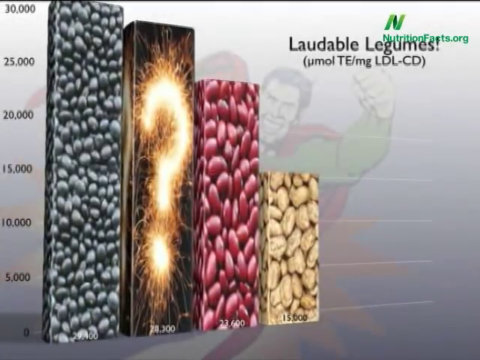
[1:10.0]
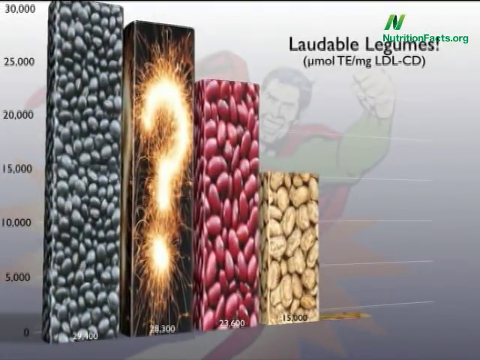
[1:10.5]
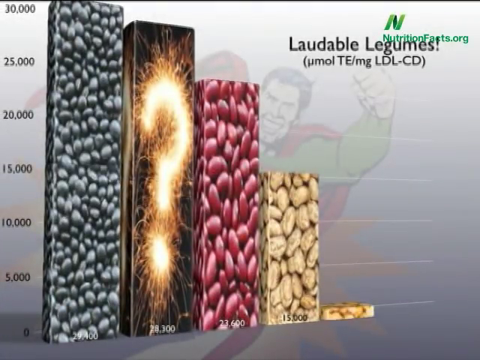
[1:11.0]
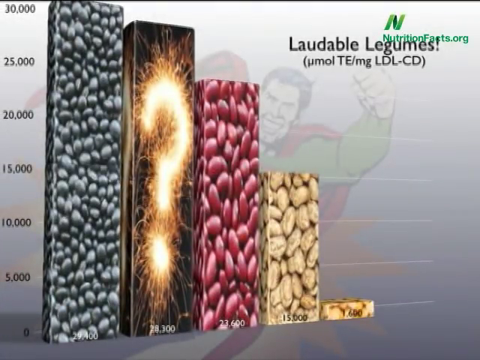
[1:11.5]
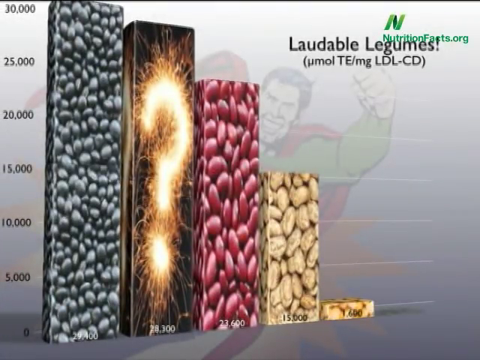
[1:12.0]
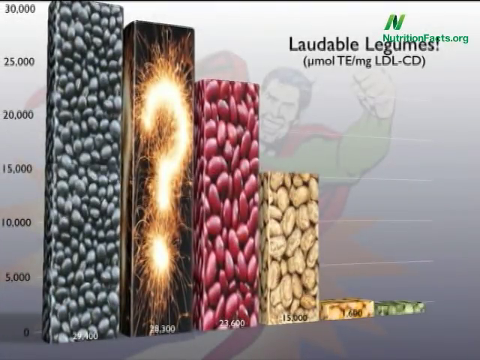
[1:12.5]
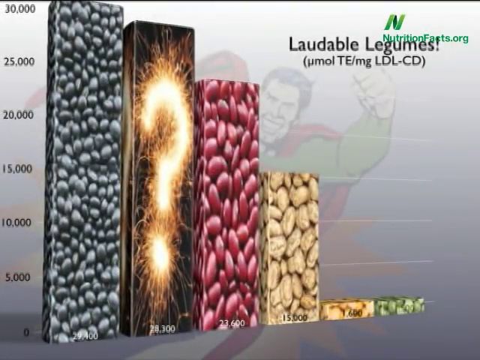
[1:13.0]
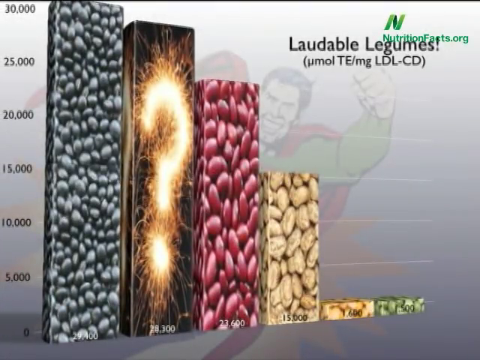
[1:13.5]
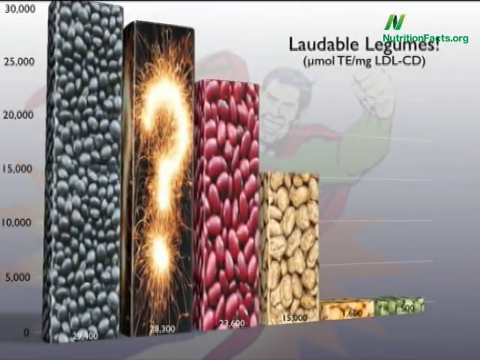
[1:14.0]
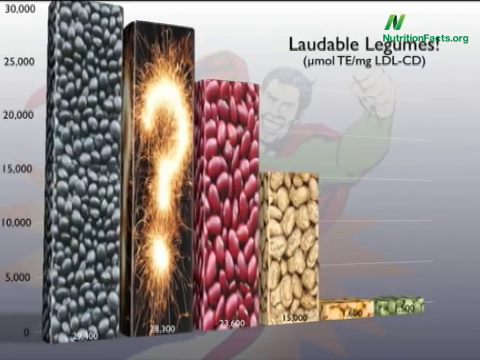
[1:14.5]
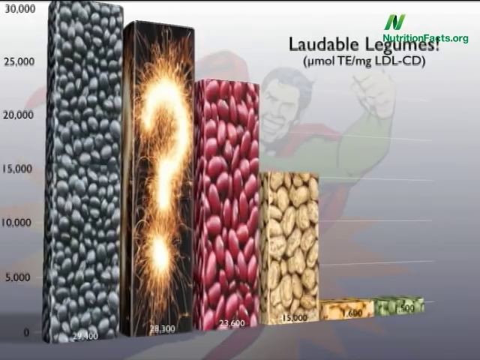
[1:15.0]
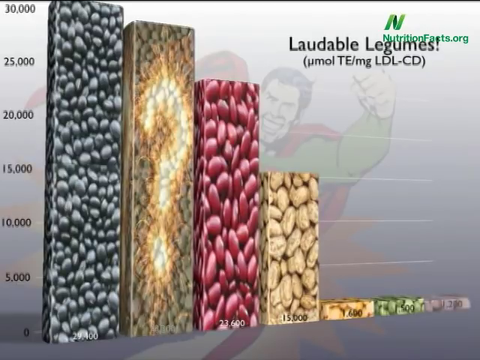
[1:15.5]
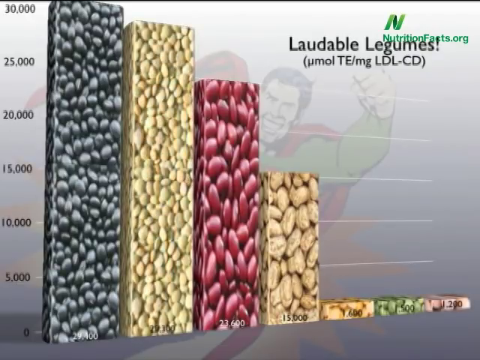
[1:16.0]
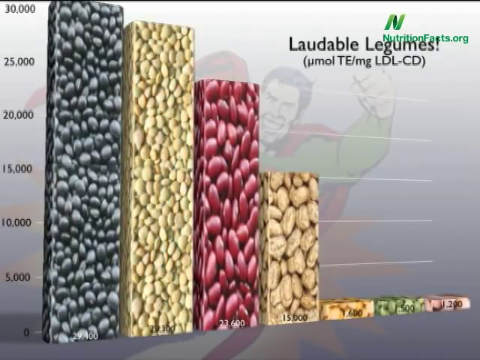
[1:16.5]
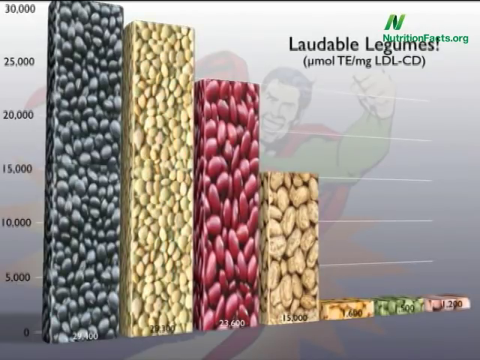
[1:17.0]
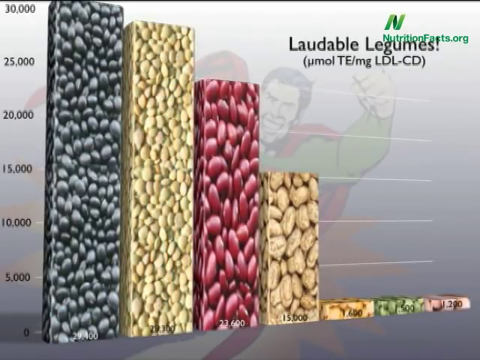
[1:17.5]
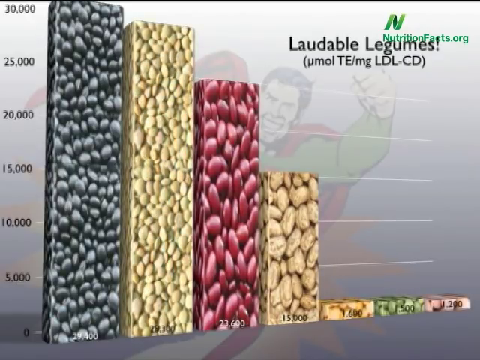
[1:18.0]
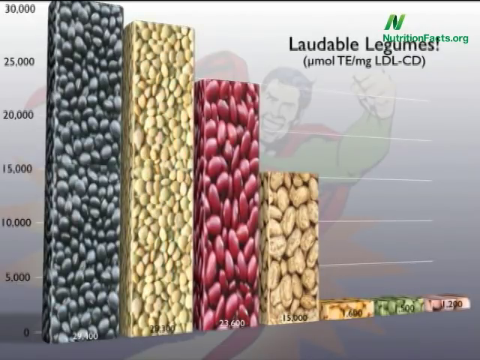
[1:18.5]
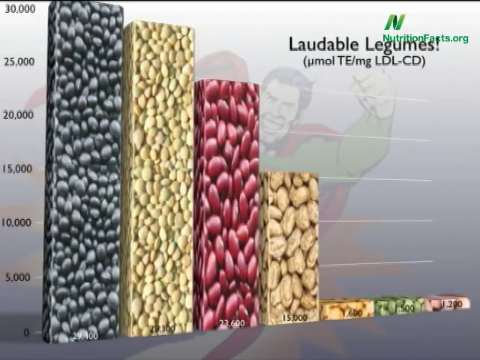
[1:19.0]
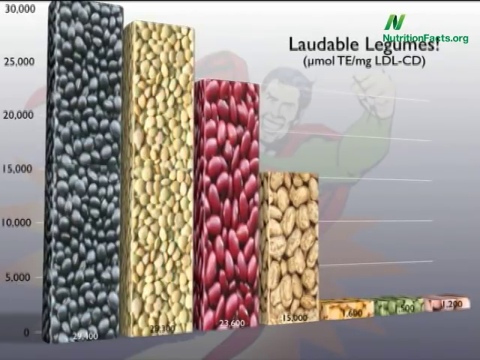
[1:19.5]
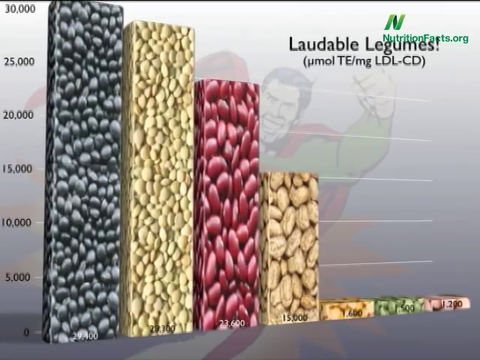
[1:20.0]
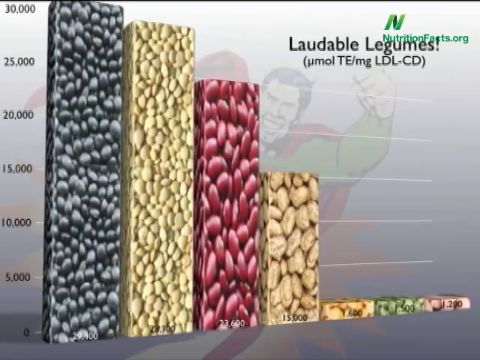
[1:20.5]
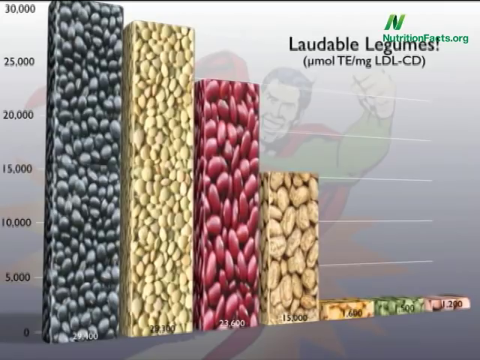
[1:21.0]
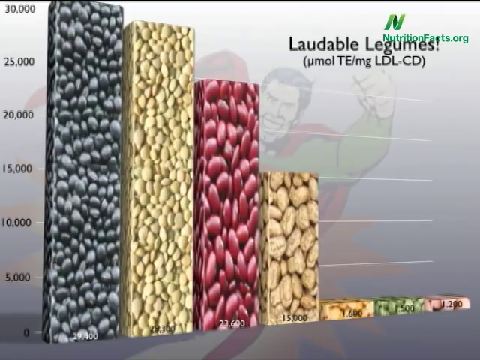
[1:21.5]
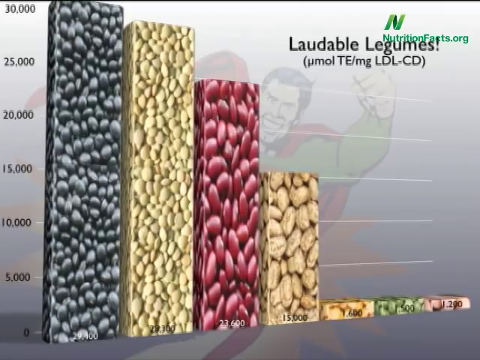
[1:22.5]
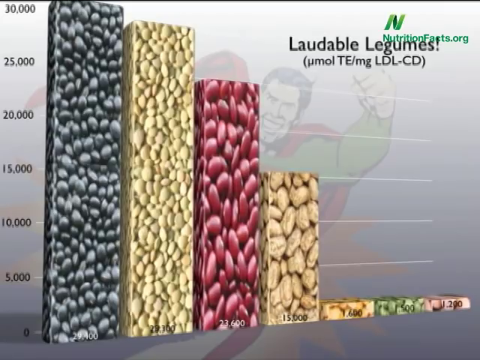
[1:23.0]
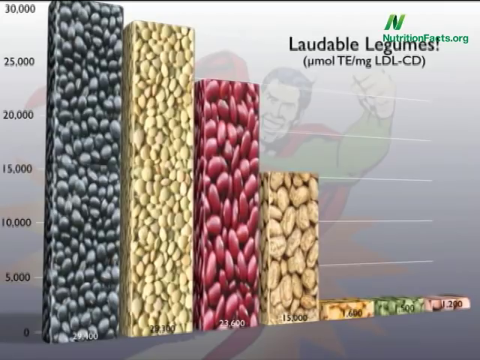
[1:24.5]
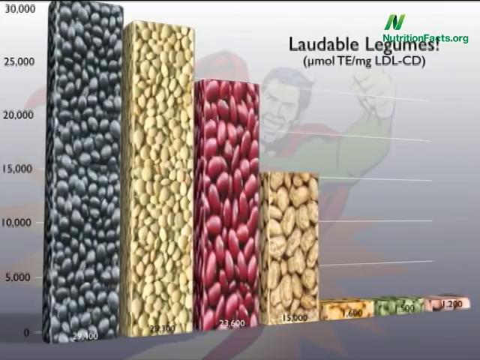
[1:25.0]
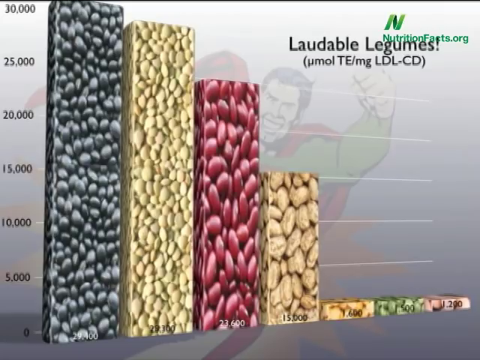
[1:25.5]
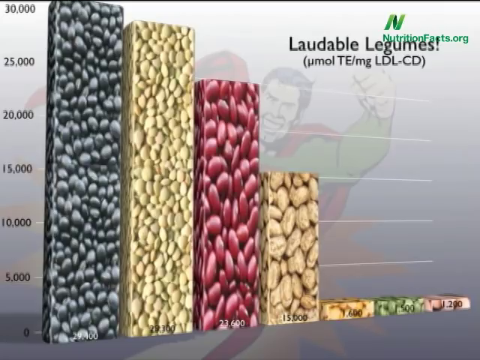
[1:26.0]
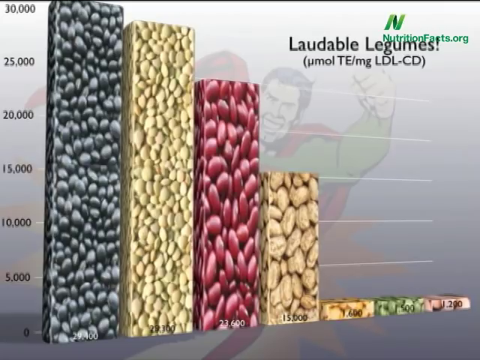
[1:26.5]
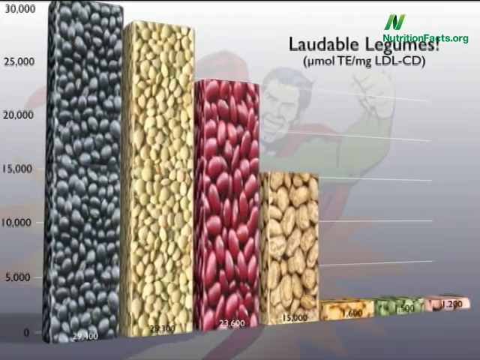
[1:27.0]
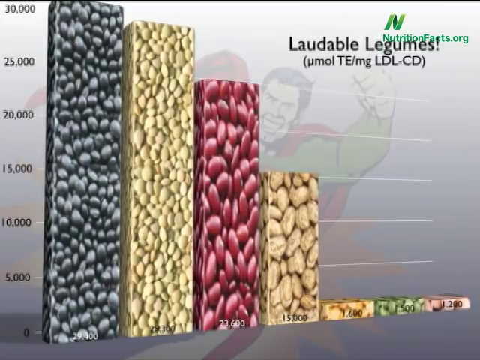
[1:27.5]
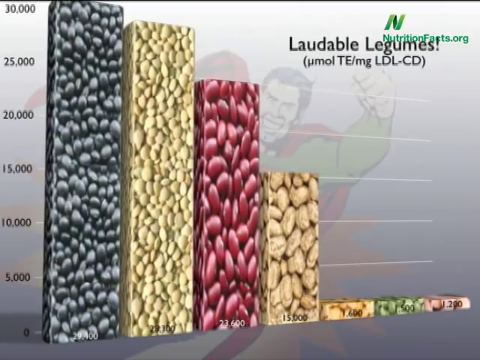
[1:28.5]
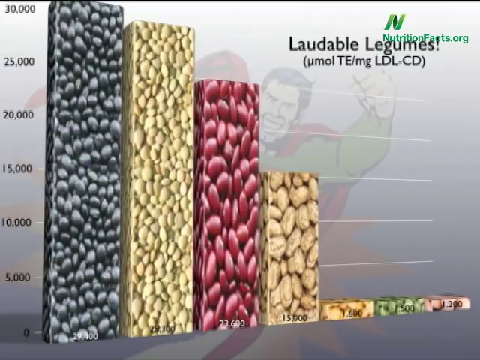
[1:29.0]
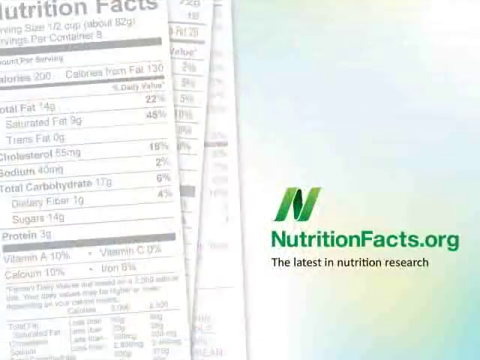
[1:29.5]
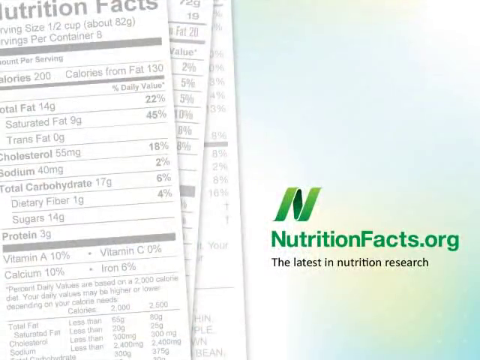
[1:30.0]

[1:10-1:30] A chart titled "Laudable Legumes" begins by showing four bars of what looks like different types of beans, after which three much smaller bars rise on the right-hand side of the screen. Animation effects play while the chart is displayed. The first bar is about 30,000, the second about 28,000, the third about 24,000 and the fourth about 15,000, while the last three are under 2,000. The y-axis is marked in steps of 5,000. The NutritionFacts.org logo is in the top right corner, and an image of a smiling man who looks like Superman appears at low opacity in the background. The video then cuts to the opening page, where nutrition labels are stacked on top of each other.